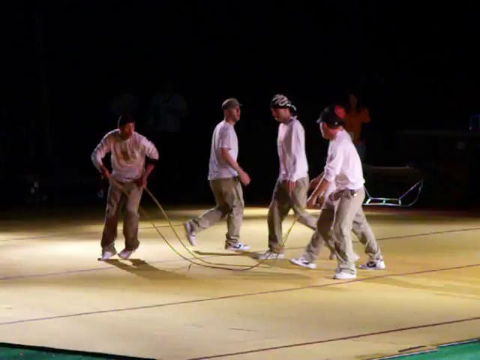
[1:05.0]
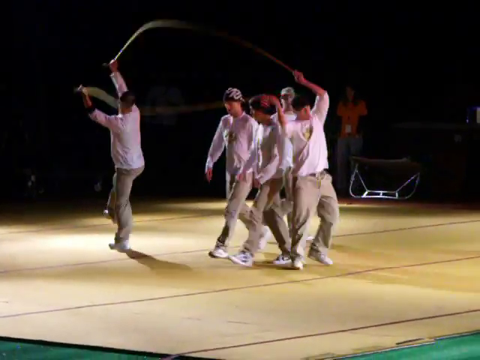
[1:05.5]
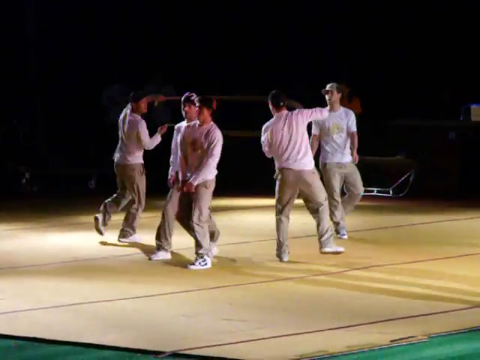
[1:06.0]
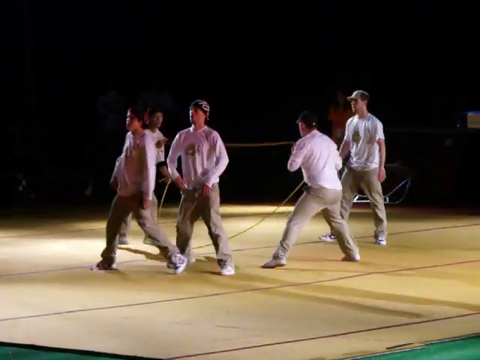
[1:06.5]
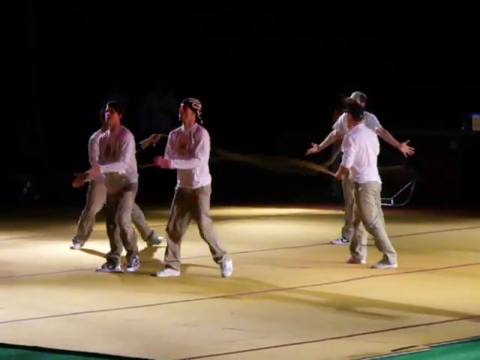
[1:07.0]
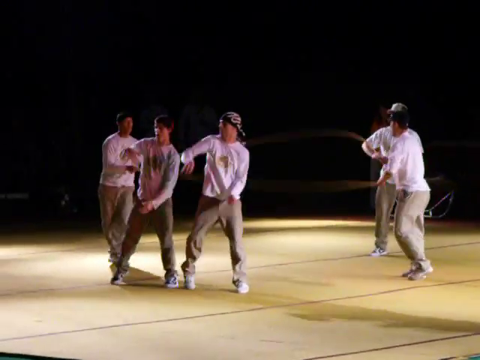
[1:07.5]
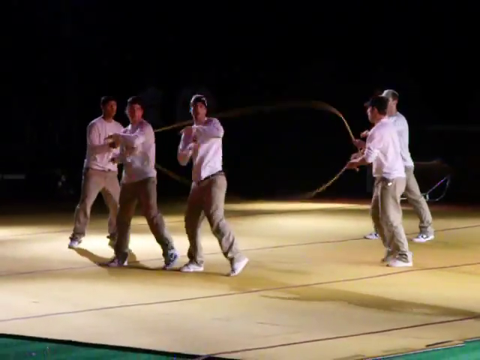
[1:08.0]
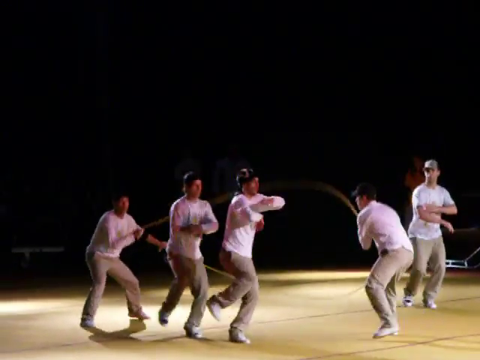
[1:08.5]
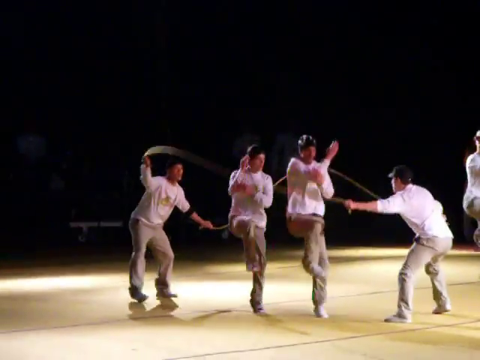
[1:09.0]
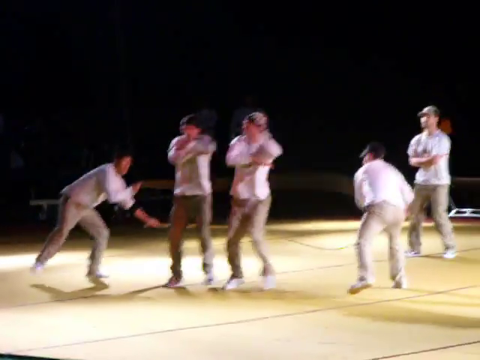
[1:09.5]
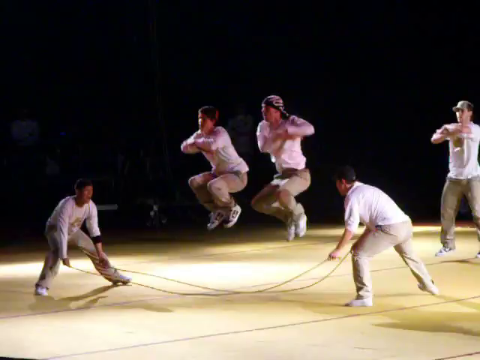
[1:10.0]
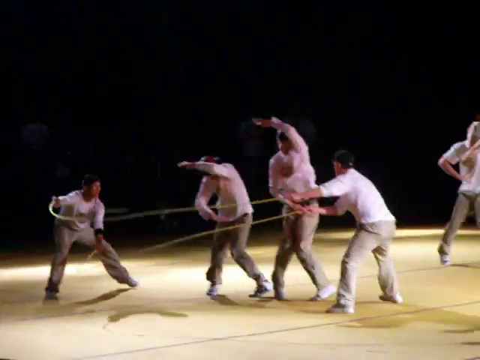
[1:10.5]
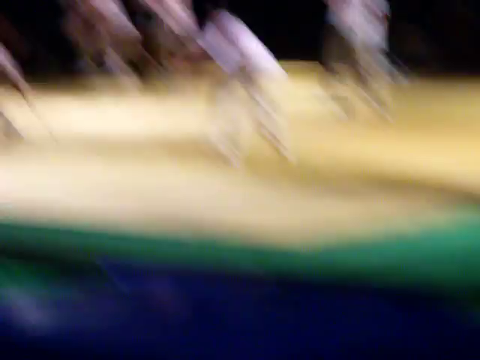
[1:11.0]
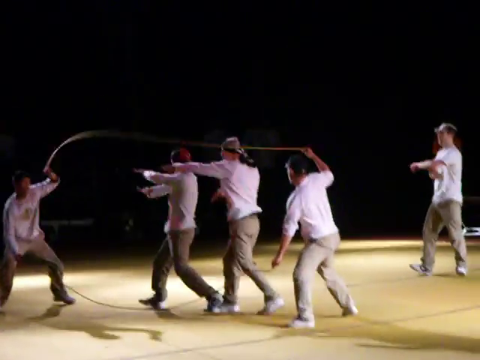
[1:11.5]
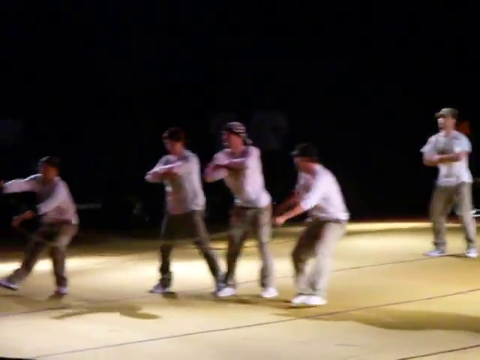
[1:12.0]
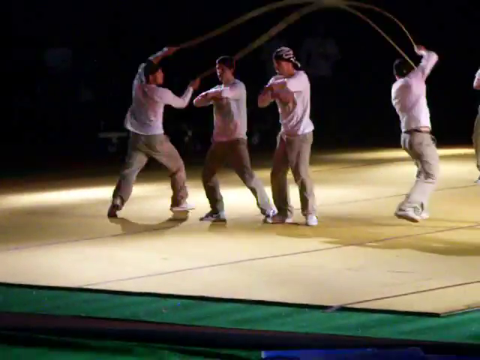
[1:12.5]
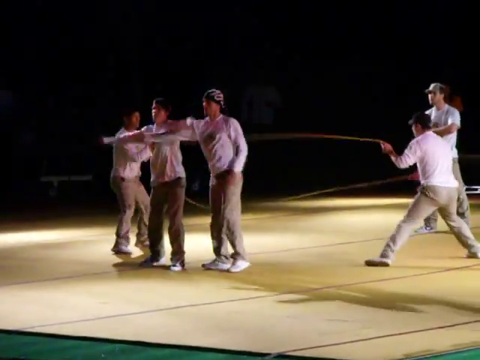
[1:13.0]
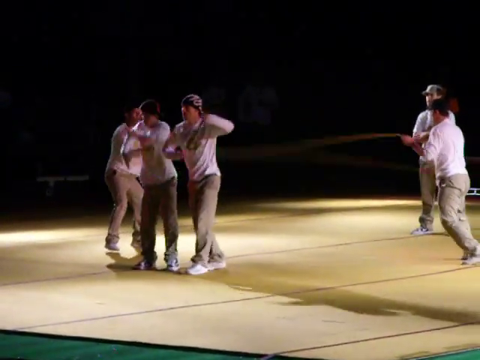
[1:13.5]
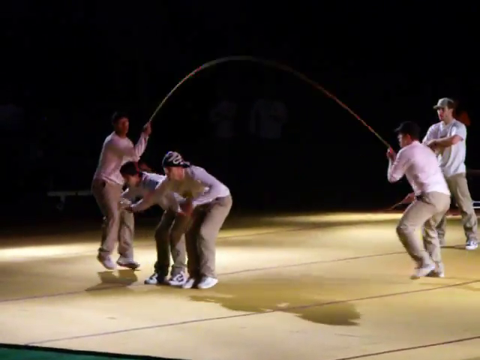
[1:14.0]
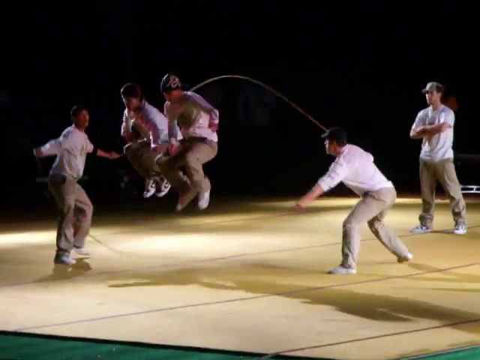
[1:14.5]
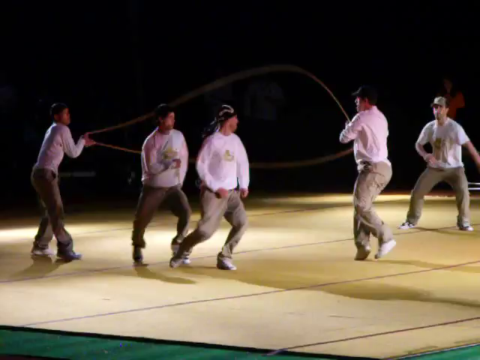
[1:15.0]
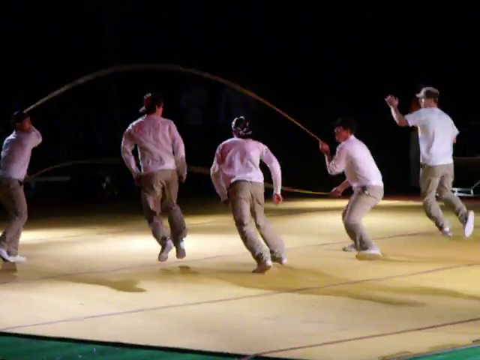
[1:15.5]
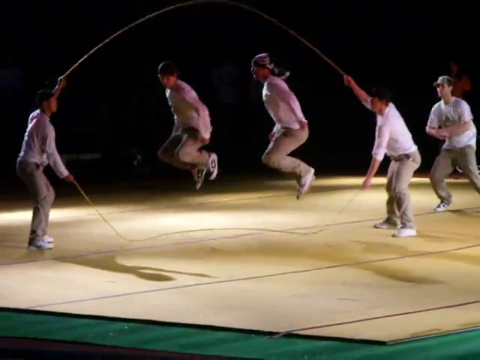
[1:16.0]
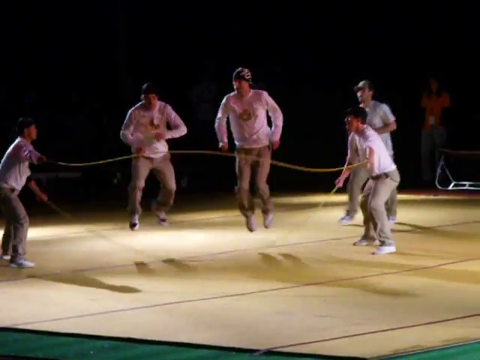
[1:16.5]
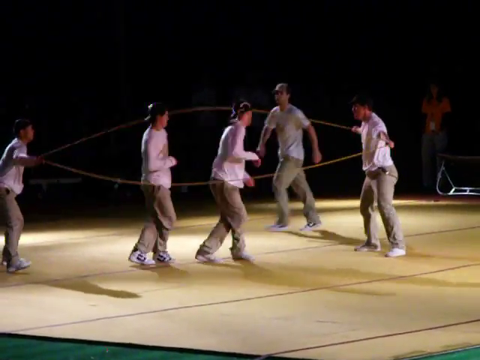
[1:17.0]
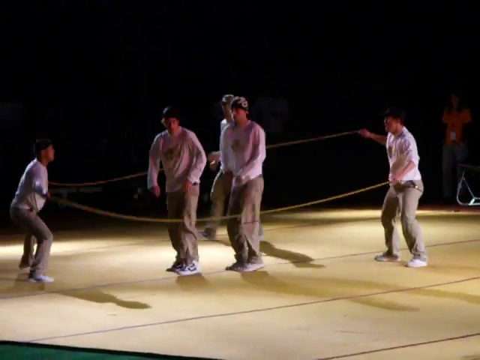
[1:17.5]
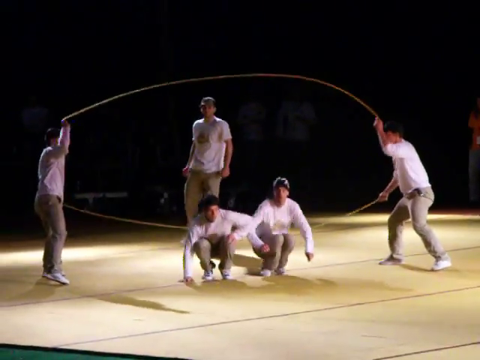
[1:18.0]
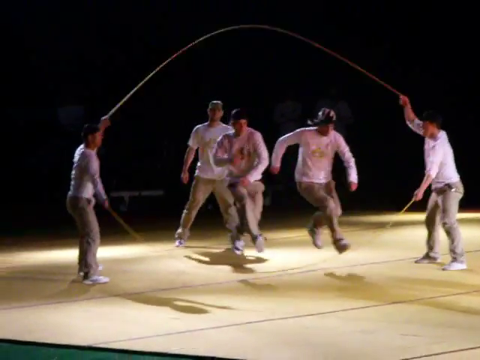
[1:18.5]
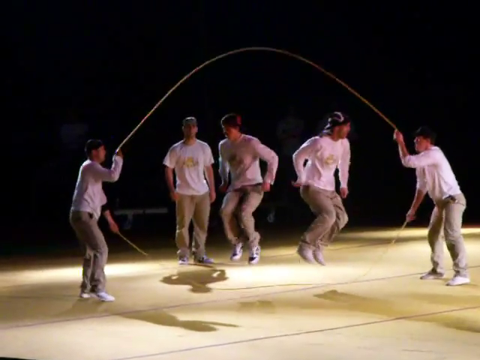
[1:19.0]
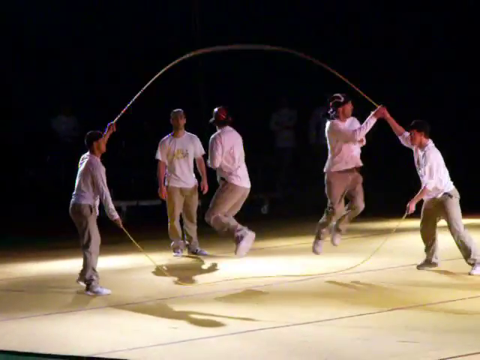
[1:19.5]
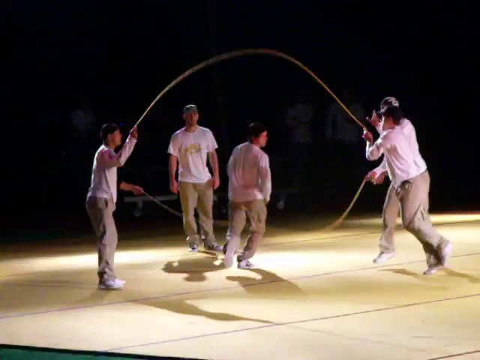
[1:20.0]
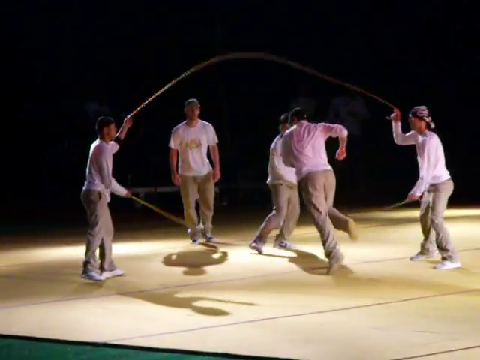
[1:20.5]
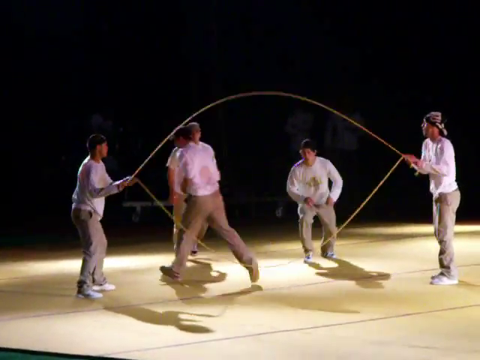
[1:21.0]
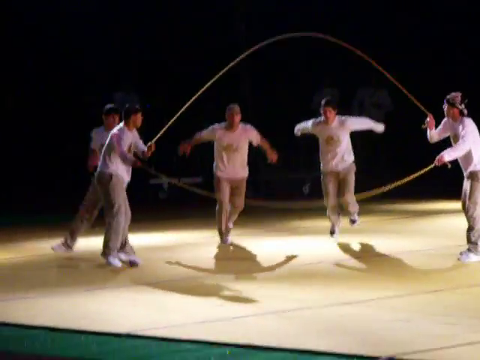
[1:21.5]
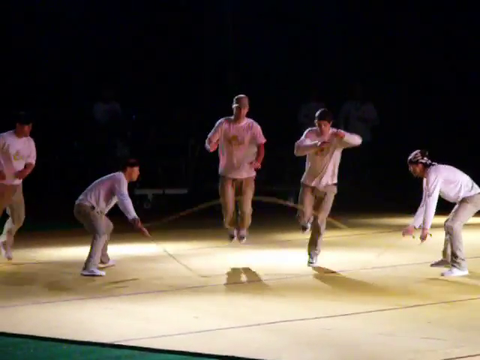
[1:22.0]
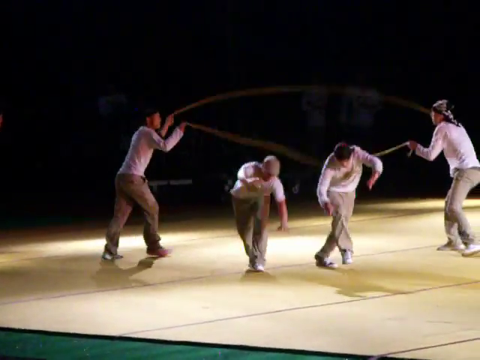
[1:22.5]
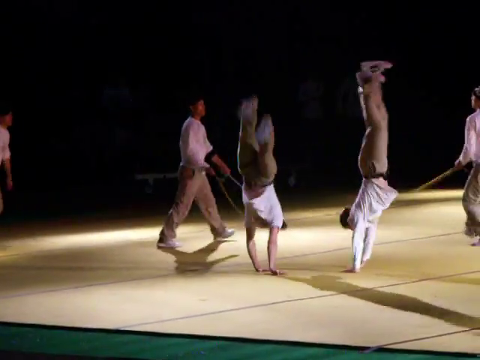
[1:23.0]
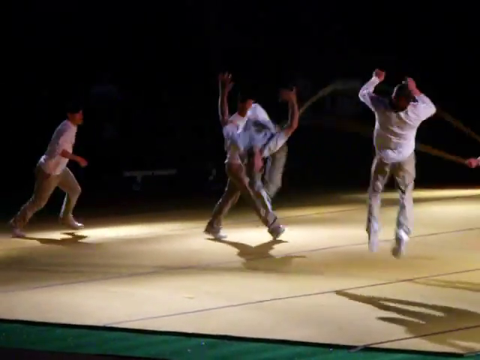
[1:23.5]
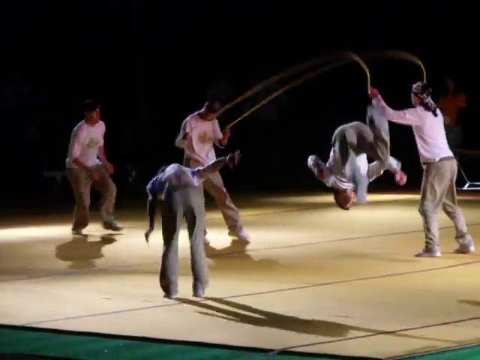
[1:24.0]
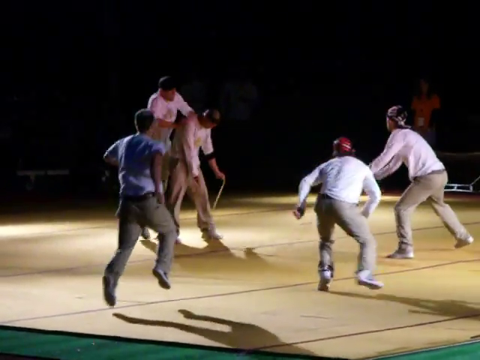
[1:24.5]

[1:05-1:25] Both people holding the ropes do a turn, and two other performers come through. They start doing dance moves that include their arms, the first time in the routine that it is full-body rather than just tricks. The two perform all their jumps and hand moves together, in a kind of popping and locking style. The camera work becomes very shaky and less focused on the action. Both performers do a turn and squat down, do a couple of heel digs, then move out of the center. One goes on to take the ropes while the two others who were waiting come in with a cartwheel and a backflip, and another jumps over one of the people controlling the ropes, which seems to be a segue into switching who turns the ropes.